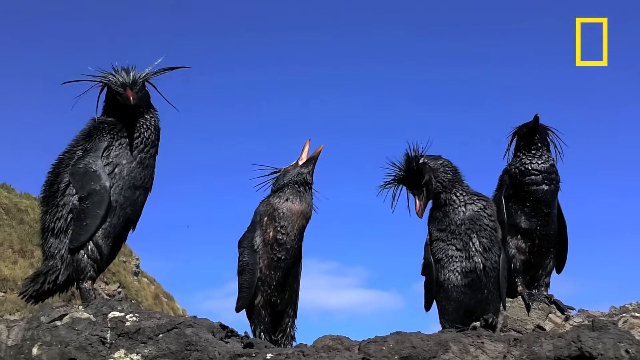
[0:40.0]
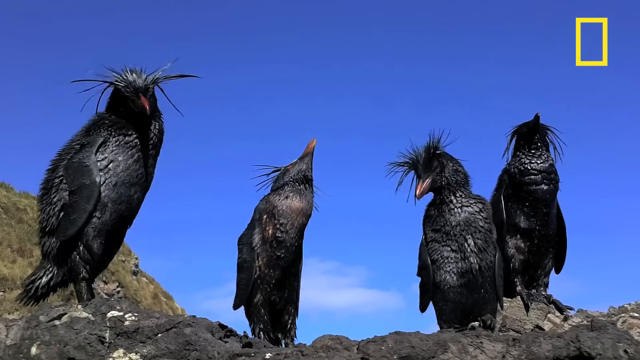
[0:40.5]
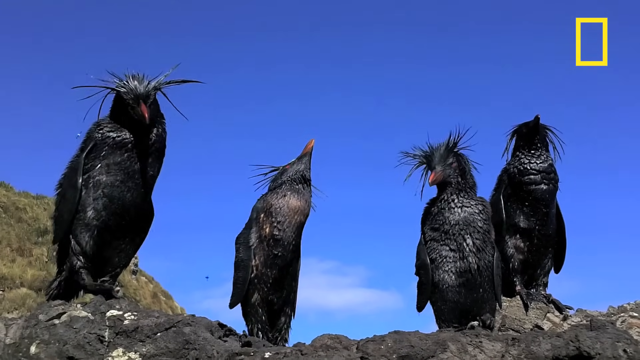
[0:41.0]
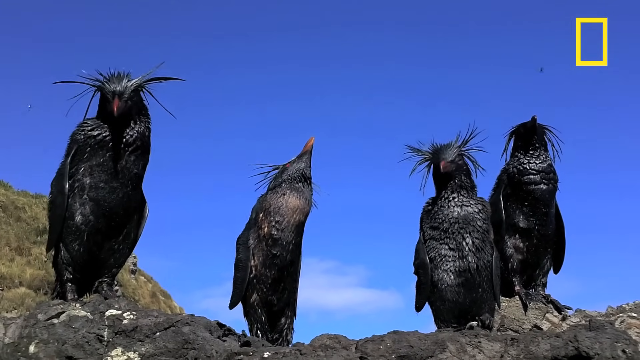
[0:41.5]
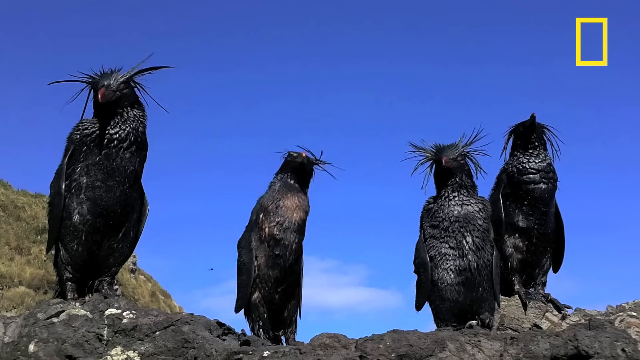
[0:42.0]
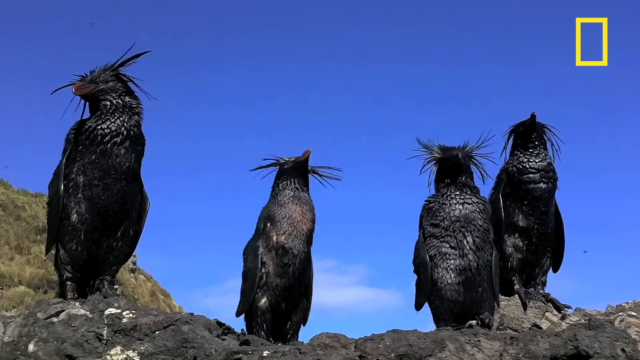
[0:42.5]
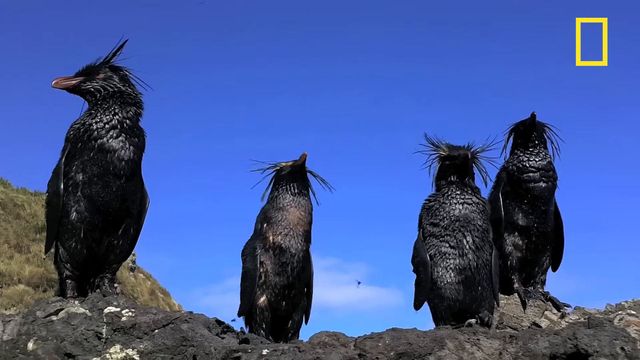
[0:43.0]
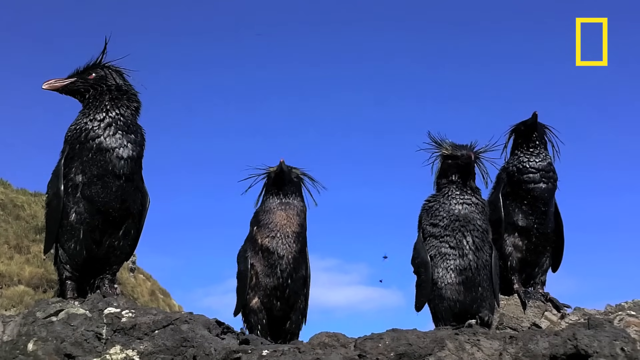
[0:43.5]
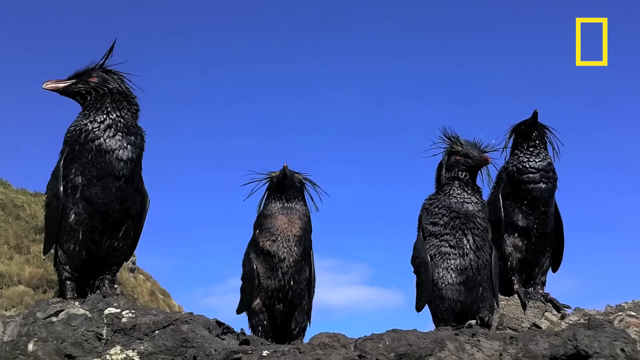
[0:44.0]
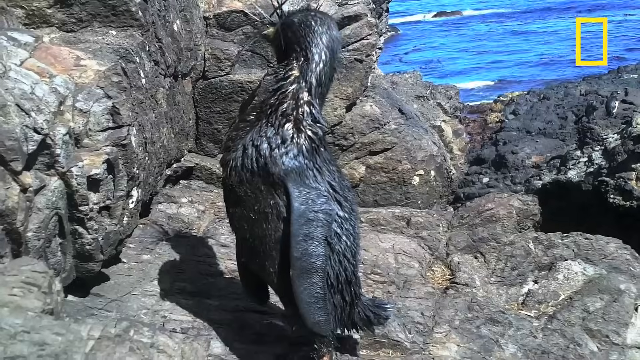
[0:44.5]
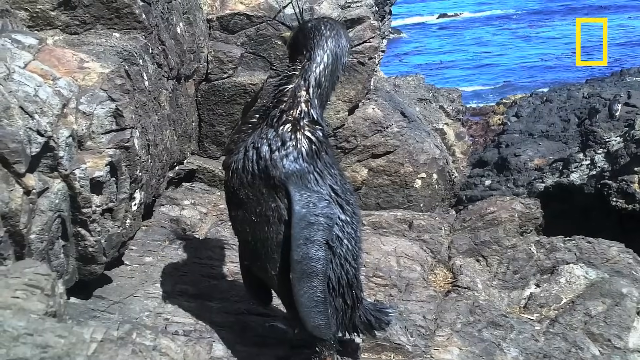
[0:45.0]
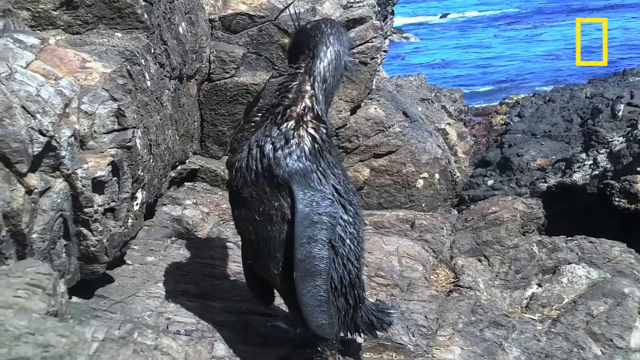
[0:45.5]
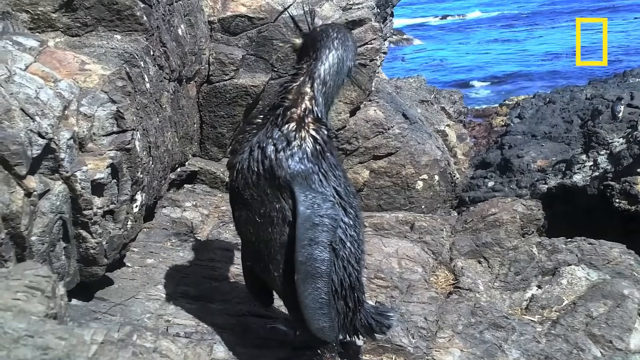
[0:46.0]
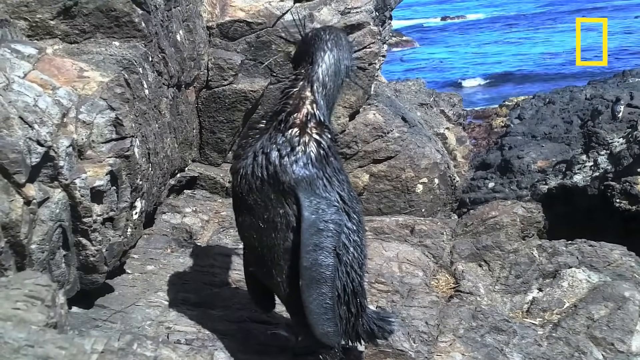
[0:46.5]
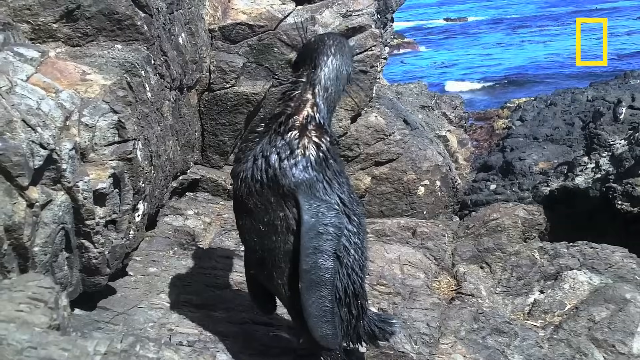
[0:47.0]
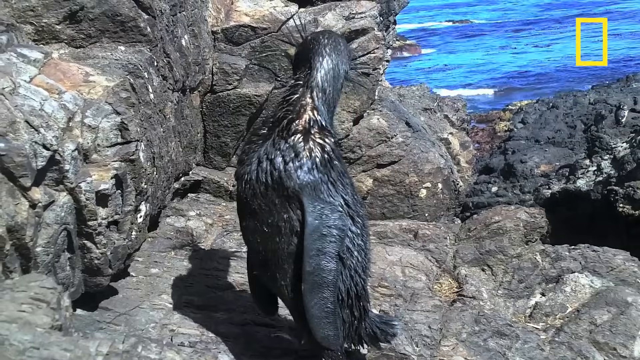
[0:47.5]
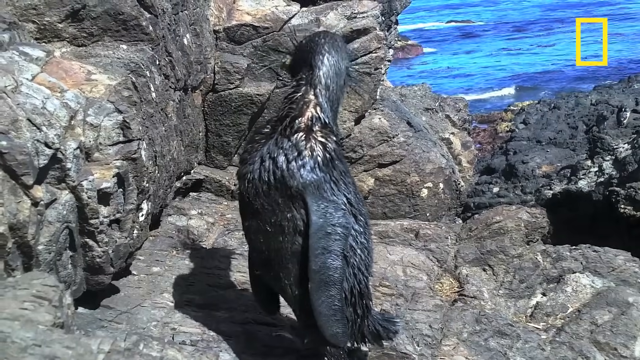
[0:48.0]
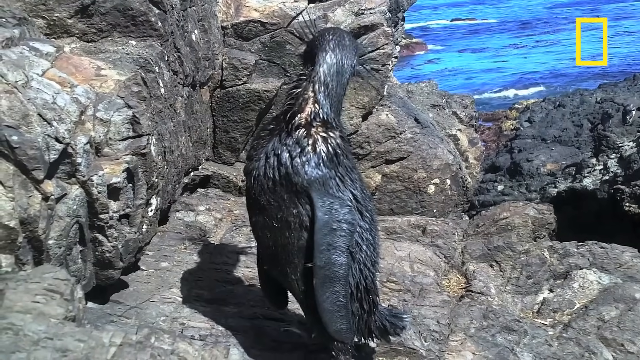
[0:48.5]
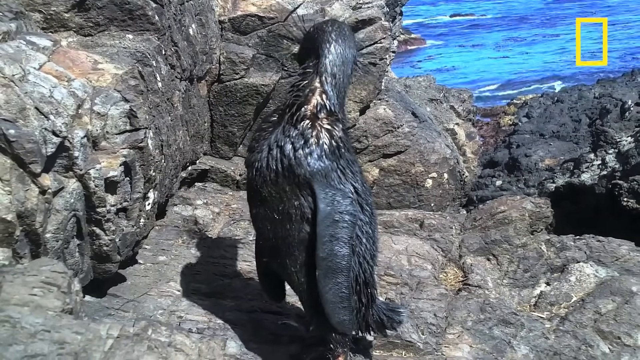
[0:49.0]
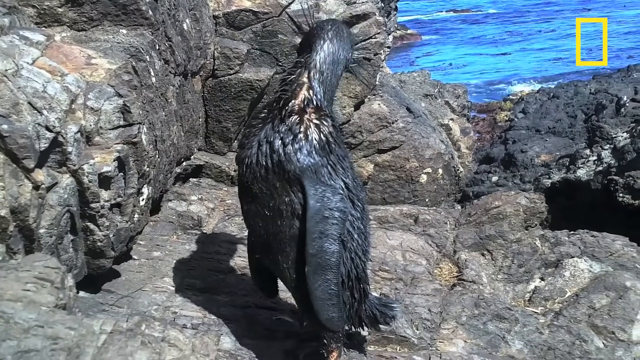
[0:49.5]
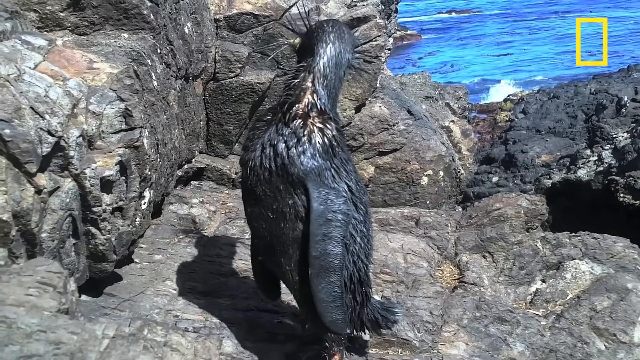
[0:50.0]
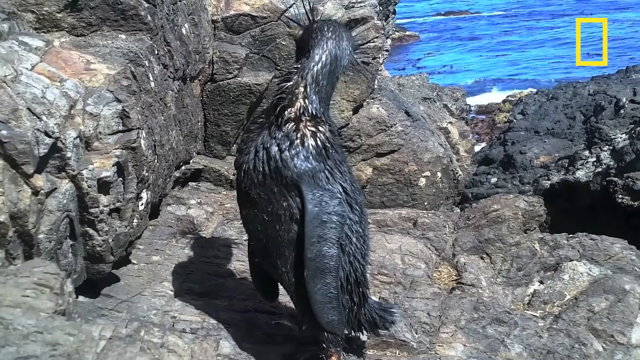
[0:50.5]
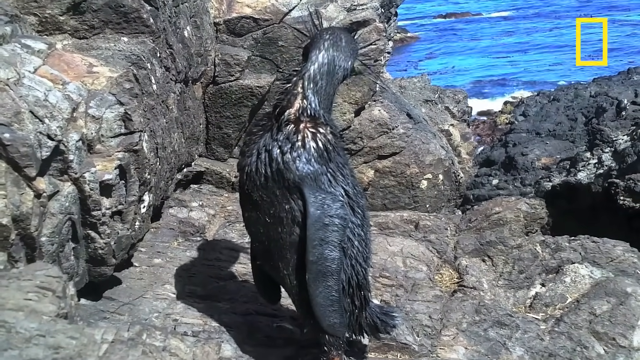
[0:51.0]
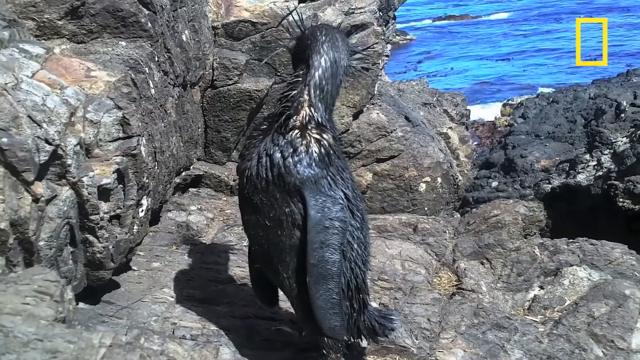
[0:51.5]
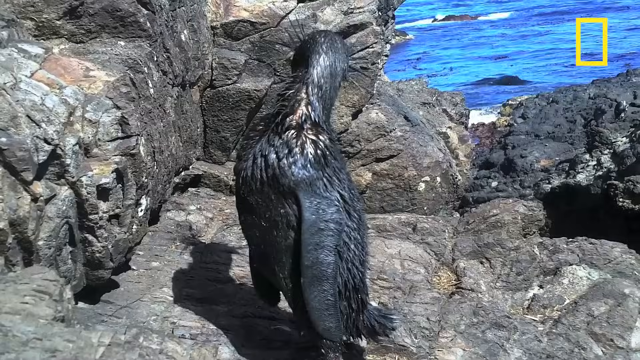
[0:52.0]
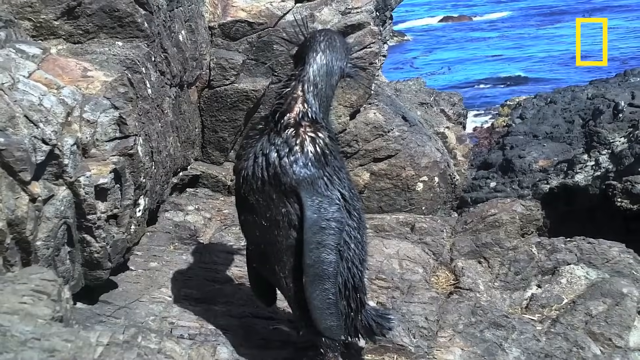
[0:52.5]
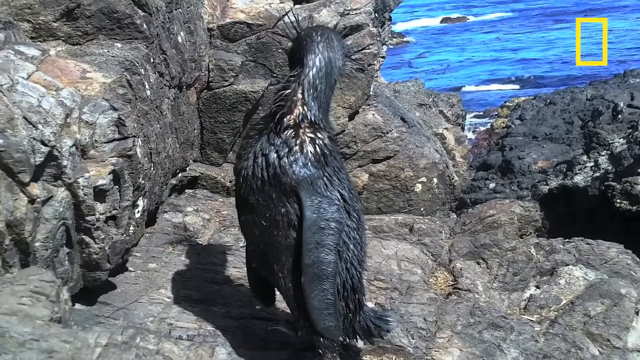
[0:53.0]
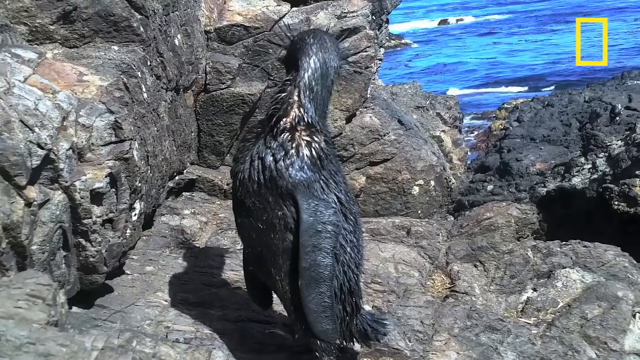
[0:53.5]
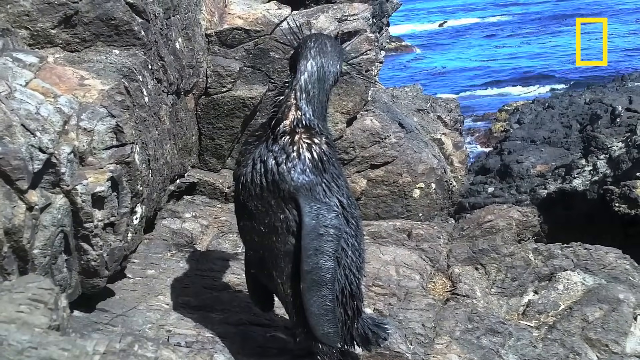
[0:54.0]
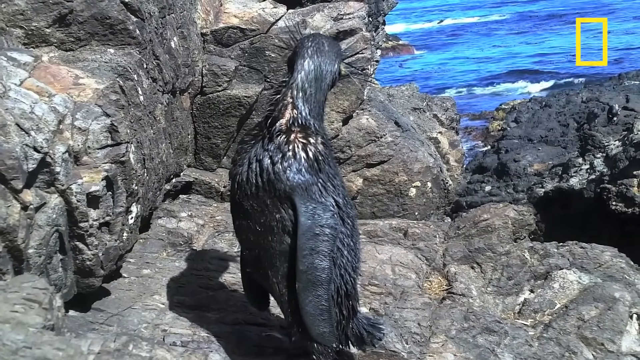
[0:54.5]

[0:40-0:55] The penguins are kind of shaking themselves on the rocks. Their fur looks wet, and it looks like they are preening or cleaning themselves. In the background the water and waves move in and out, but none of the penguins are actually in the water; they all just look wet. They stand on the rocks around the water, kind of shaking and moving around, and seem to be staying in a group. The sky in the background is the same blue. They are so wet and slick that it almost looks maybe like oil.